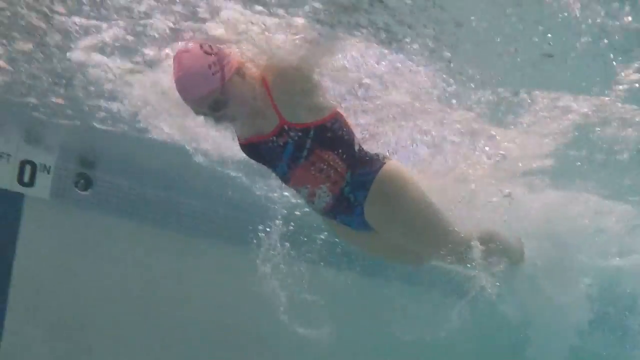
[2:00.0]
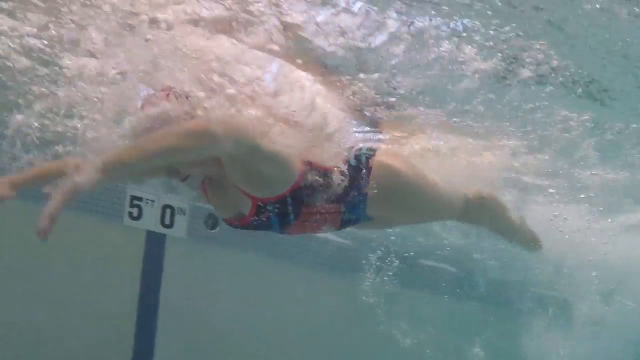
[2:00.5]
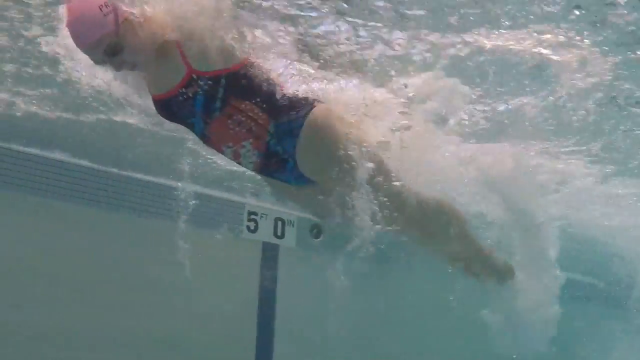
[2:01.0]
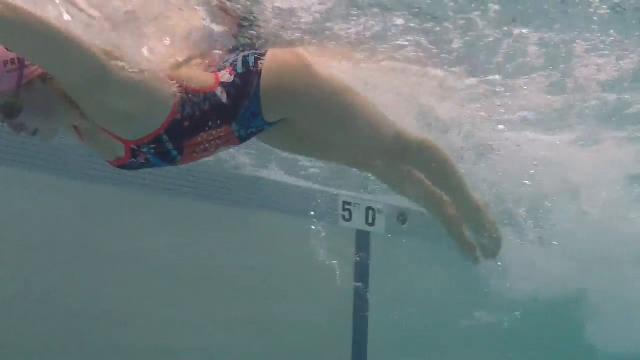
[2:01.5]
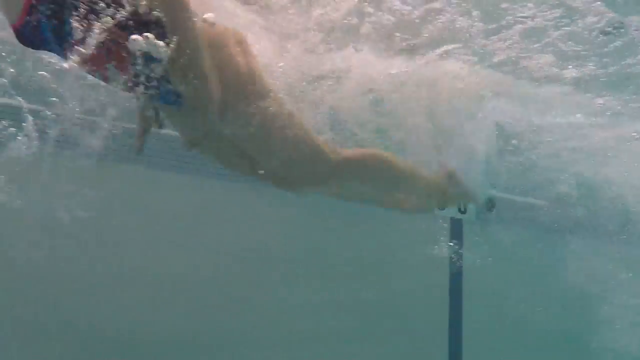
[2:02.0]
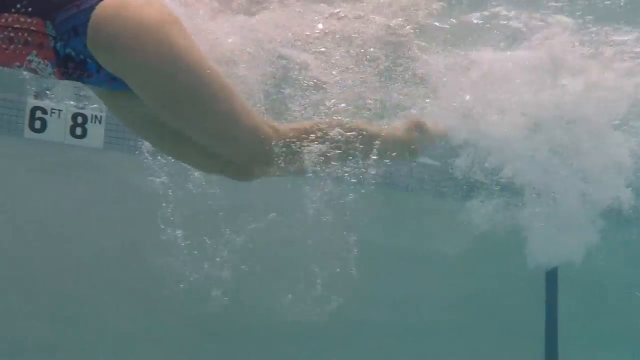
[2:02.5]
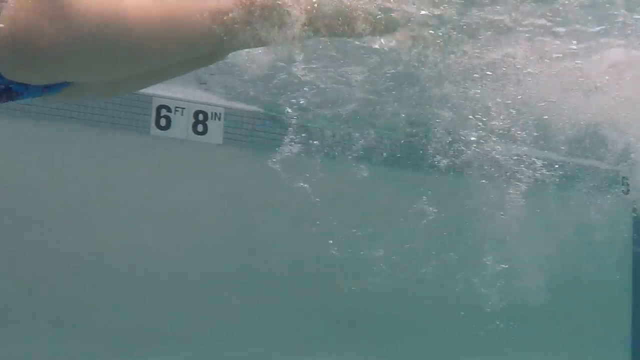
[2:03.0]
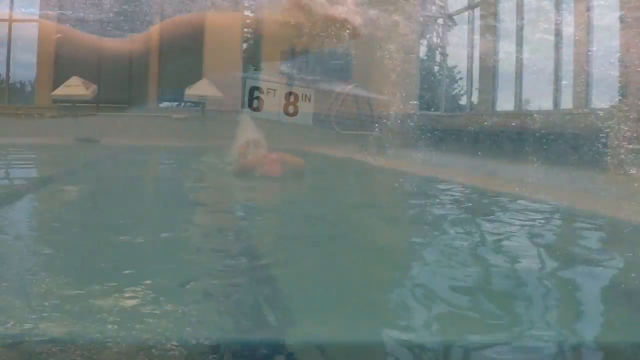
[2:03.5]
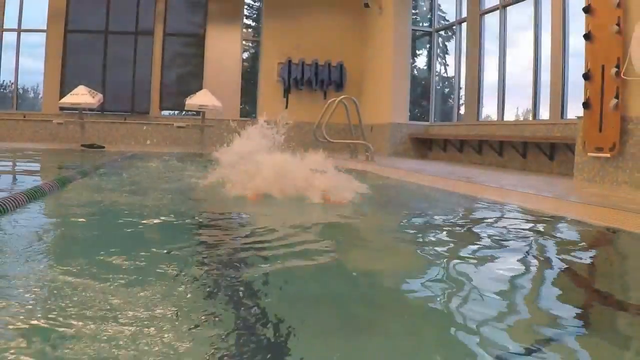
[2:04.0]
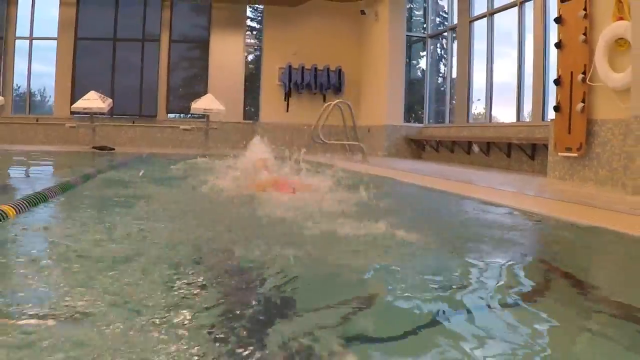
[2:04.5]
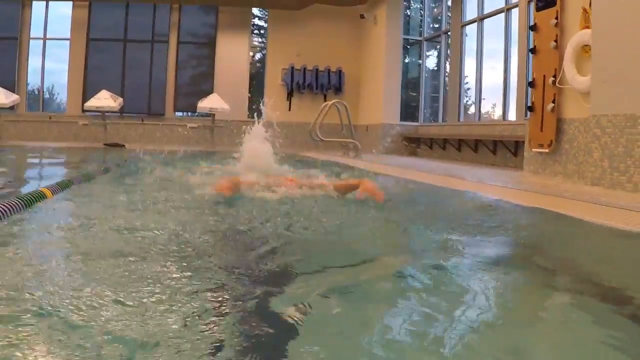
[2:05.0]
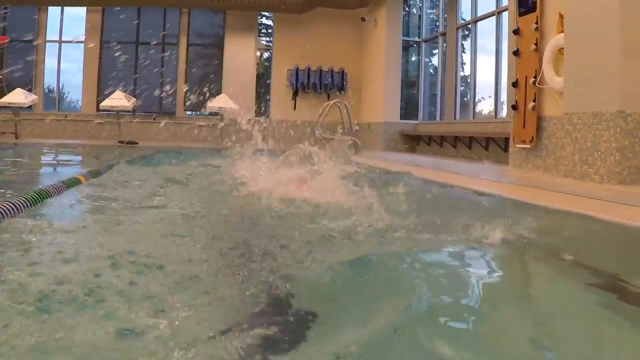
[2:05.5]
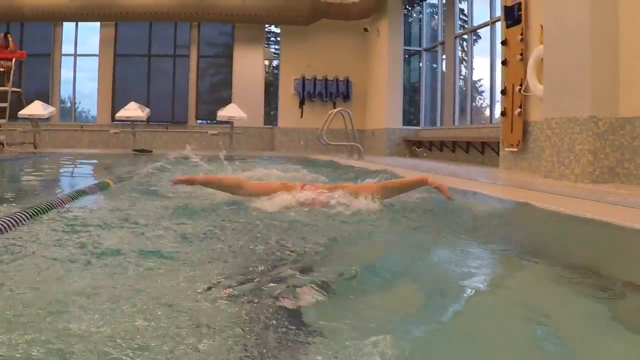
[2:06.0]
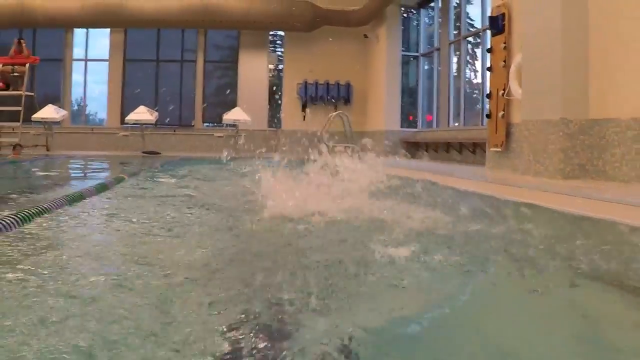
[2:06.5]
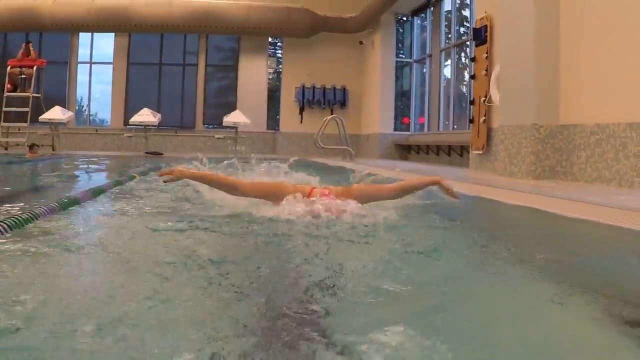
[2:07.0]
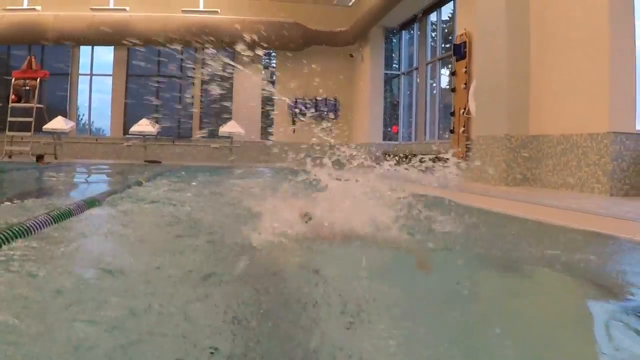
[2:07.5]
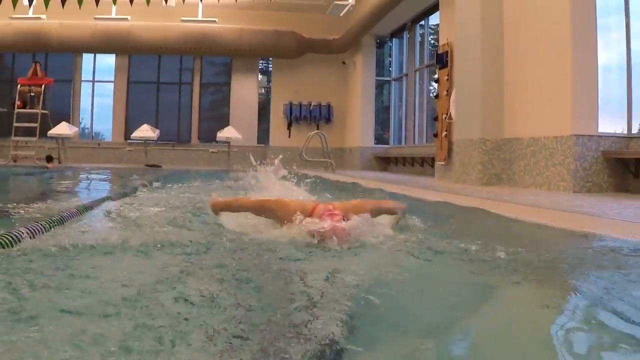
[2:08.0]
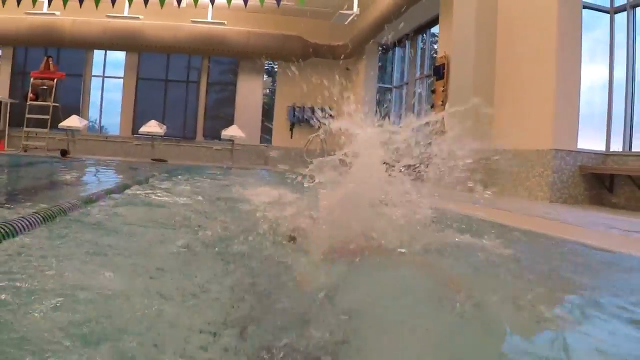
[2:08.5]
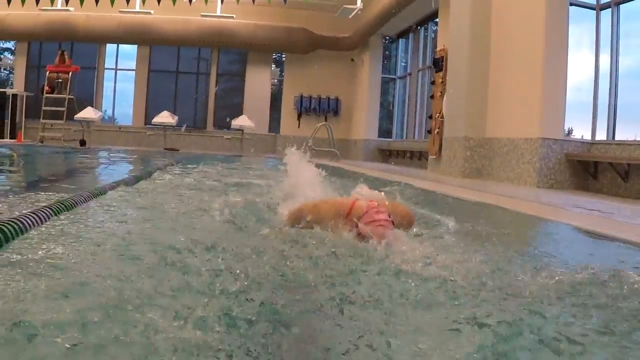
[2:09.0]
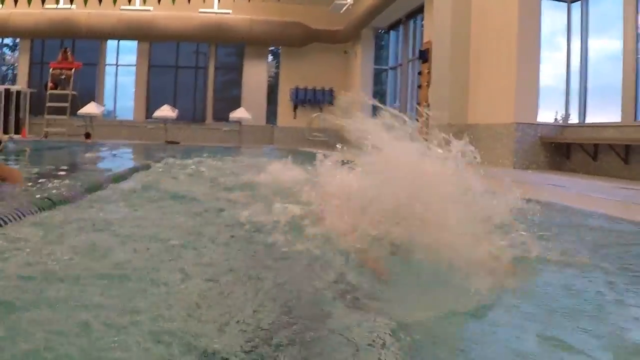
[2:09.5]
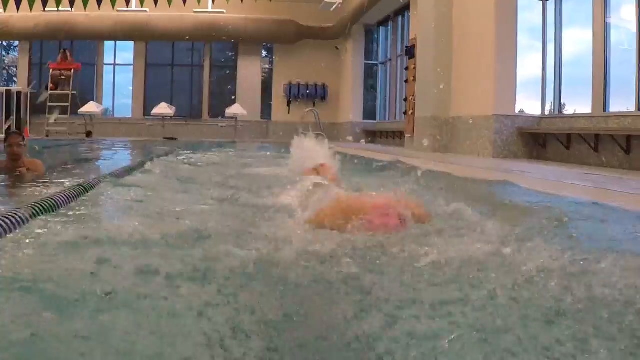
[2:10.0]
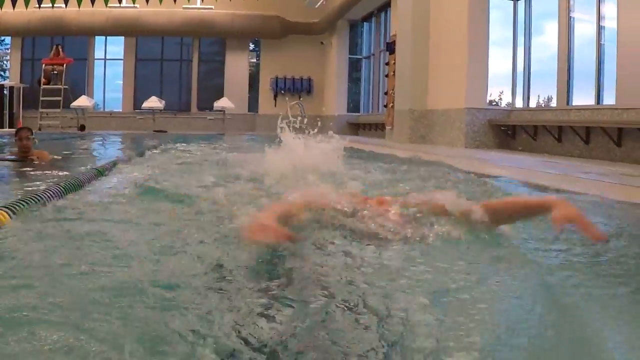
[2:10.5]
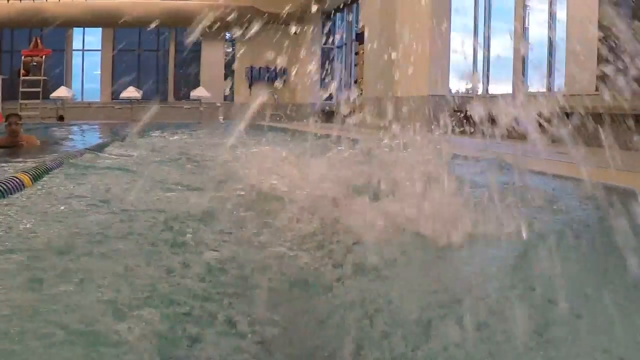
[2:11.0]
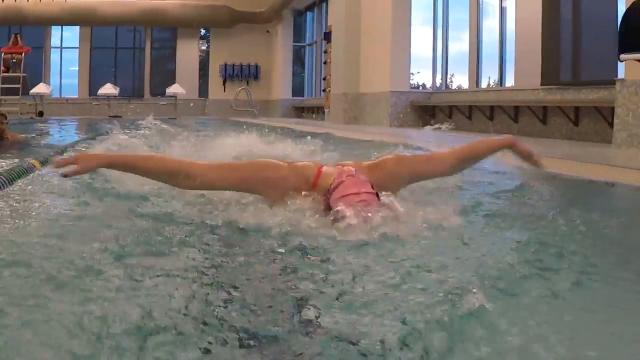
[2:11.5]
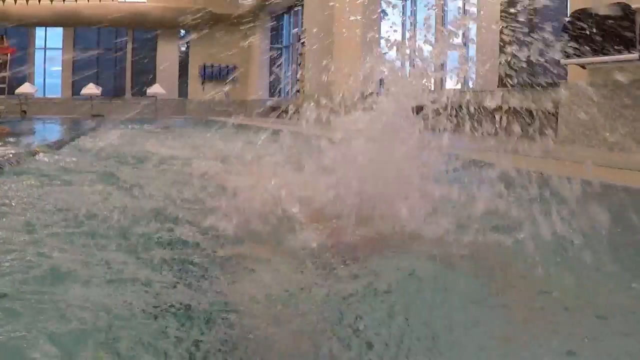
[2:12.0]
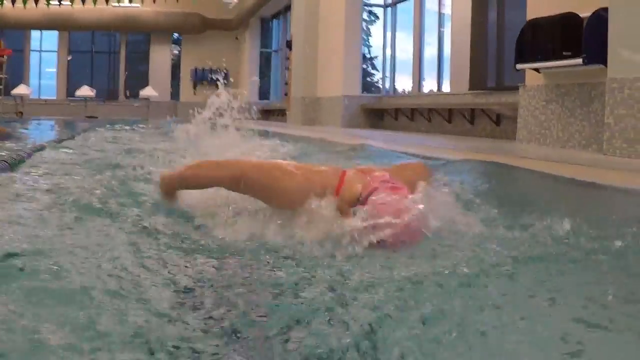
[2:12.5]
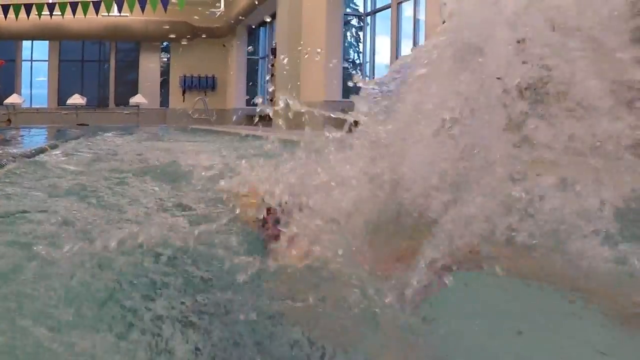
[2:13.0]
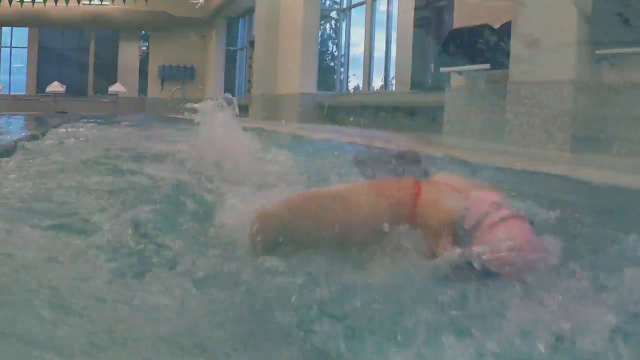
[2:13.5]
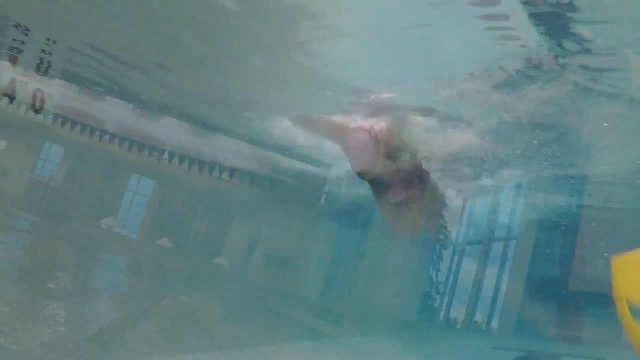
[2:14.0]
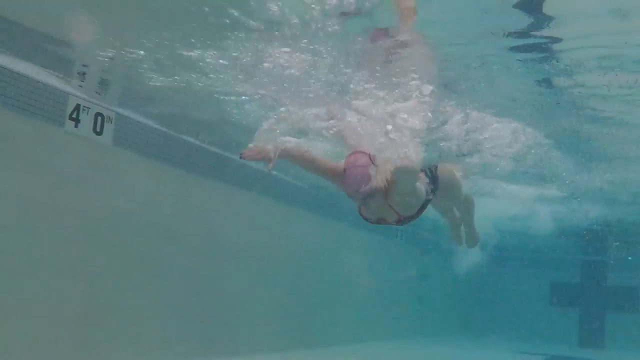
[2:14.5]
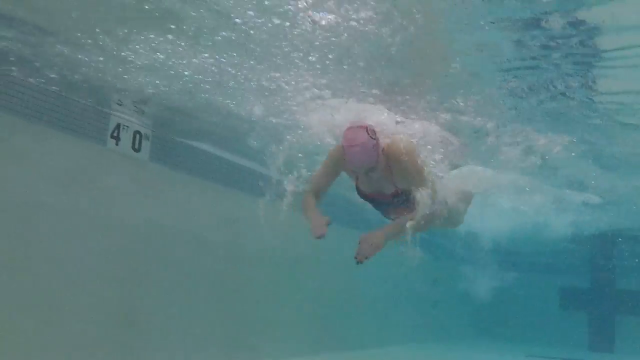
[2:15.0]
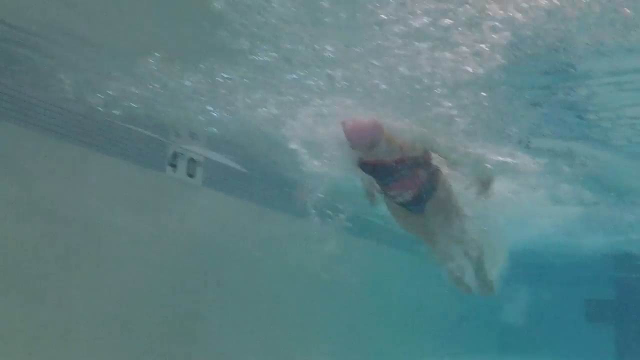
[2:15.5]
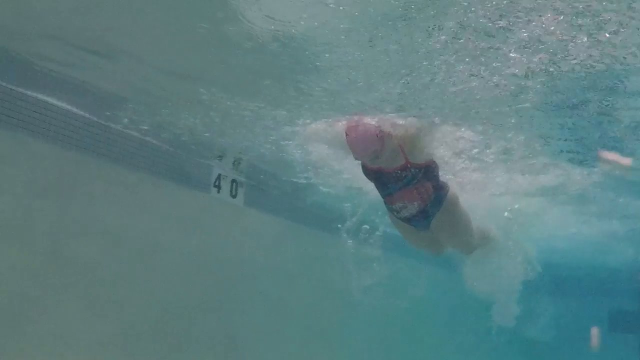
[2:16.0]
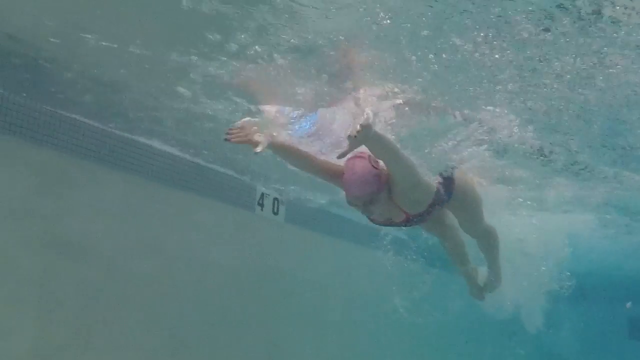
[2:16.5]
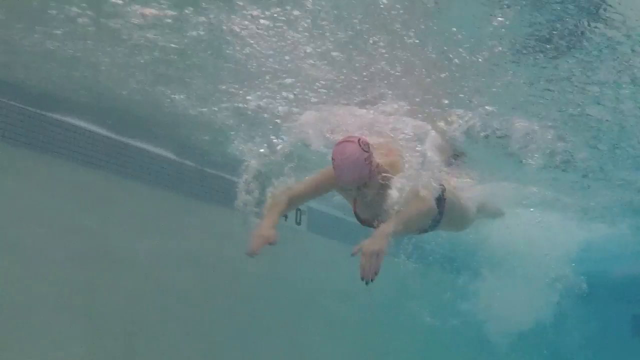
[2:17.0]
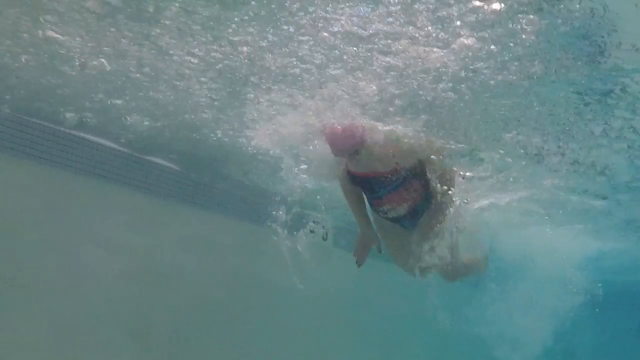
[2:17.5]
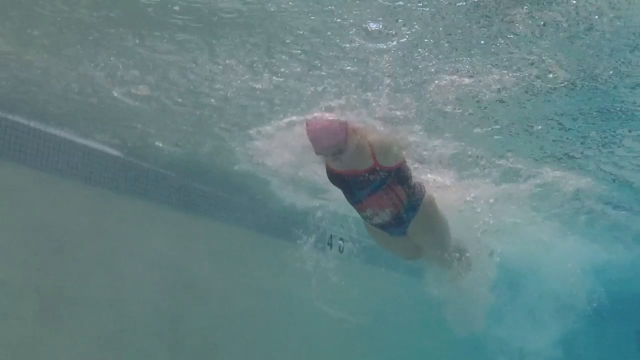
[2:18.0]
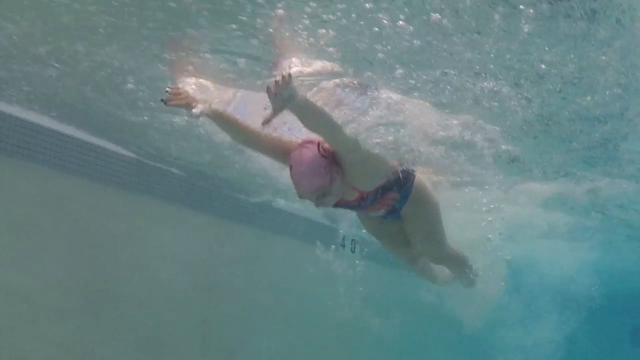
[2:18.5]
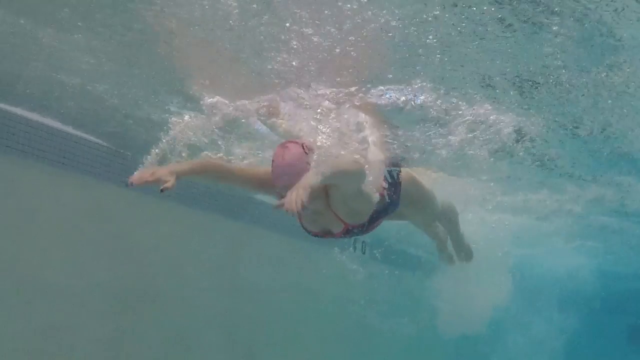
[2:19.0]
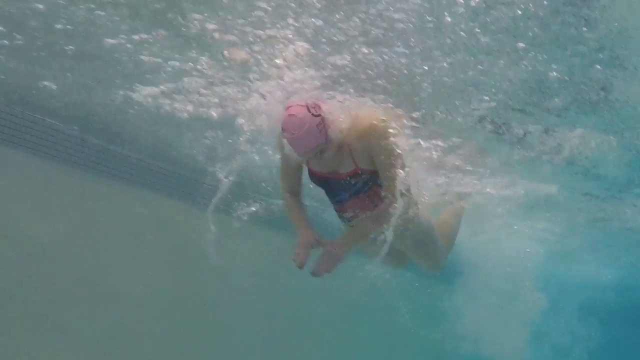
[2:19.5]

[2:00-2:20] The title screen is completely black with all the writing in white font in regular uppercase and lowercase, except the word "LOW", which is in all caps: "butterfly: five progression steps for LOW fly butterfly sprint drill". The woman in the pool does the butterfly stroke from the front with freestyle kicking. She then does the actual butterfly, shown in slow motion to display the coordination: the arms go, then the legs kick, arms go, legs kick. She wears a pink swim cap, black goggles and a blue maillot with red or hot pink trim and designs that are hard to make out; they look kind of pink with some diagonal lines, possibly outer space, maybe with Jupiter.